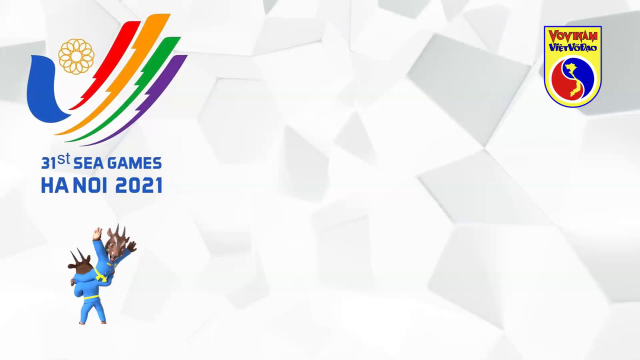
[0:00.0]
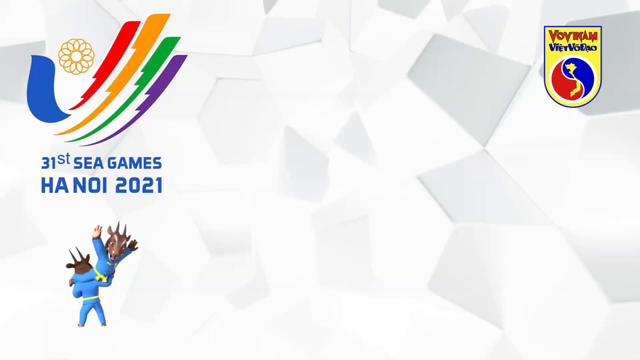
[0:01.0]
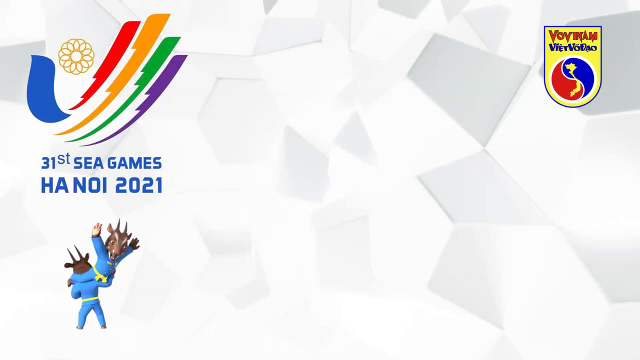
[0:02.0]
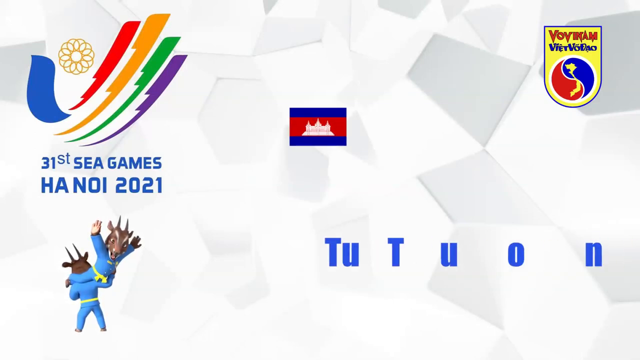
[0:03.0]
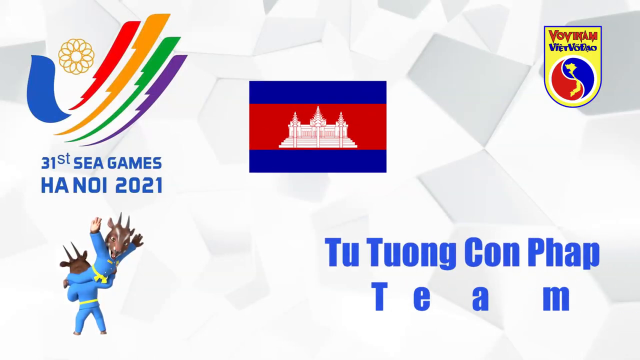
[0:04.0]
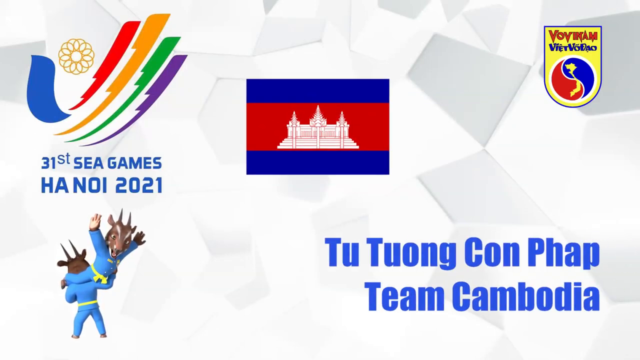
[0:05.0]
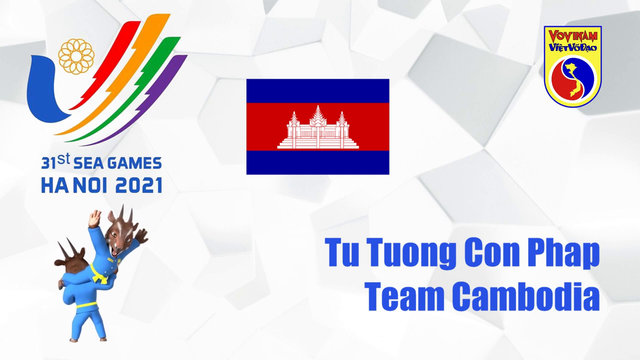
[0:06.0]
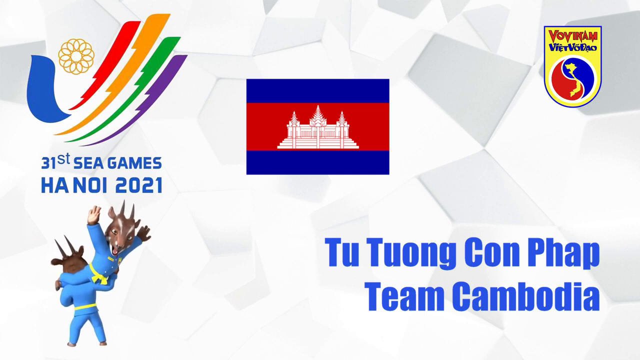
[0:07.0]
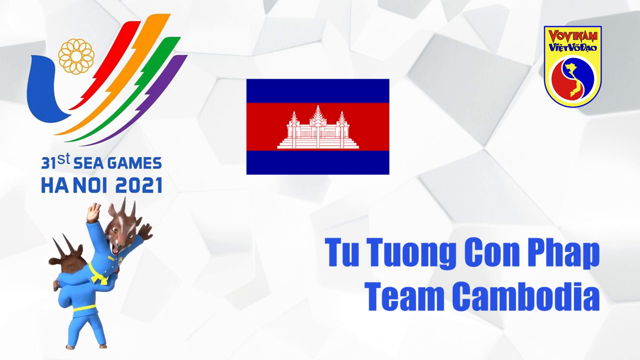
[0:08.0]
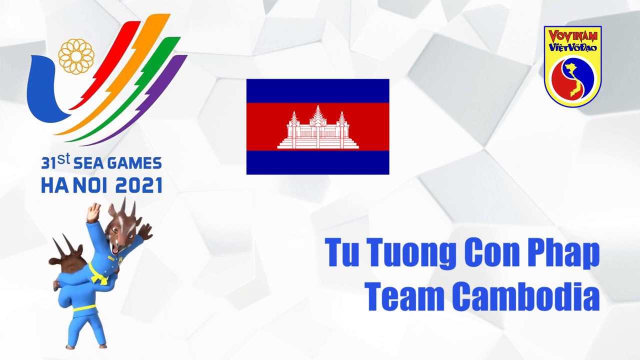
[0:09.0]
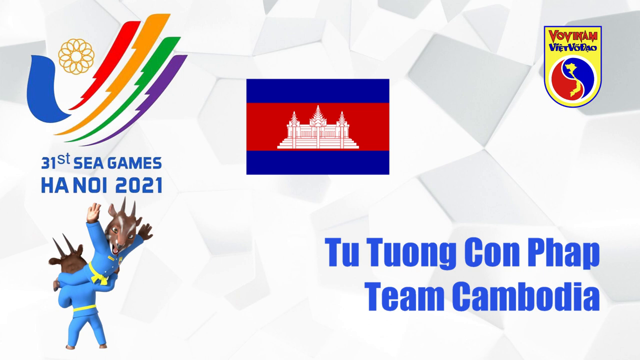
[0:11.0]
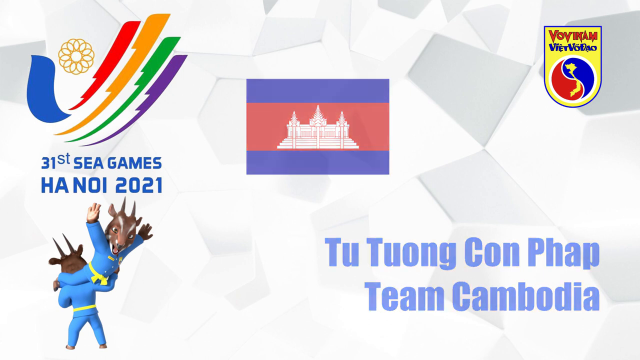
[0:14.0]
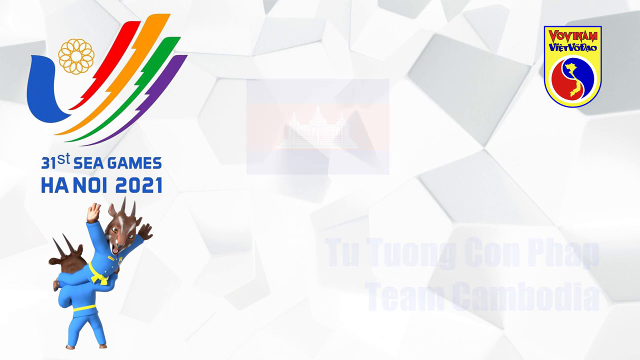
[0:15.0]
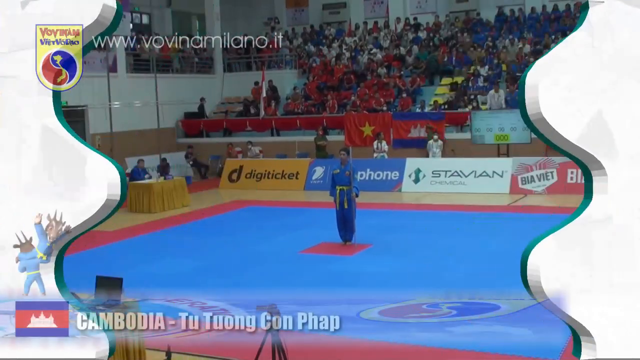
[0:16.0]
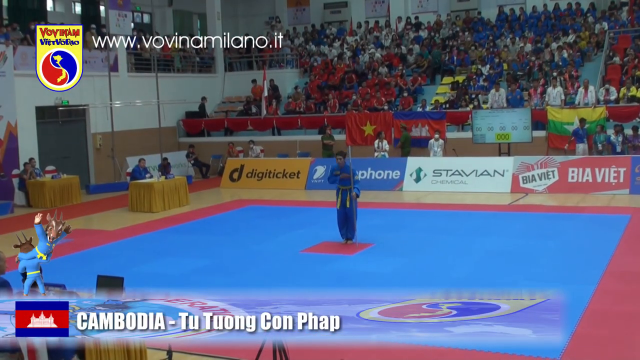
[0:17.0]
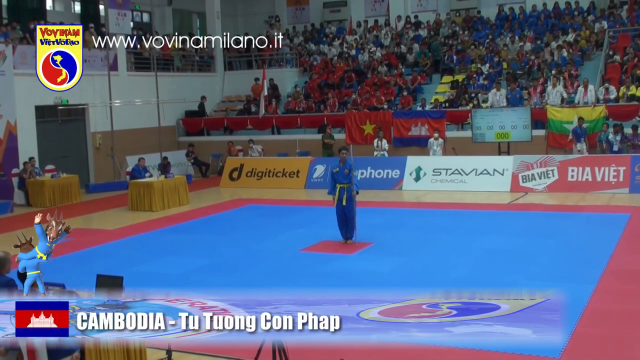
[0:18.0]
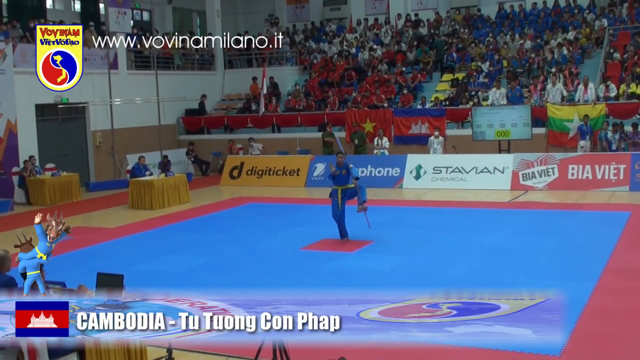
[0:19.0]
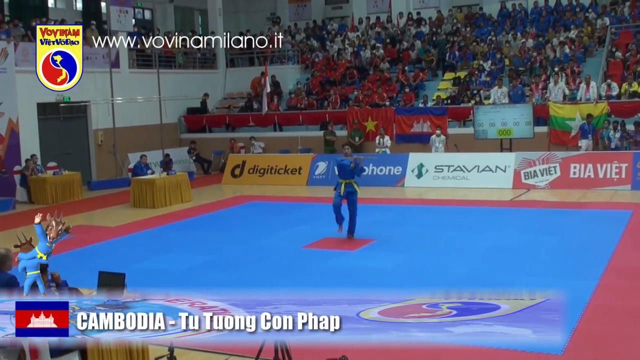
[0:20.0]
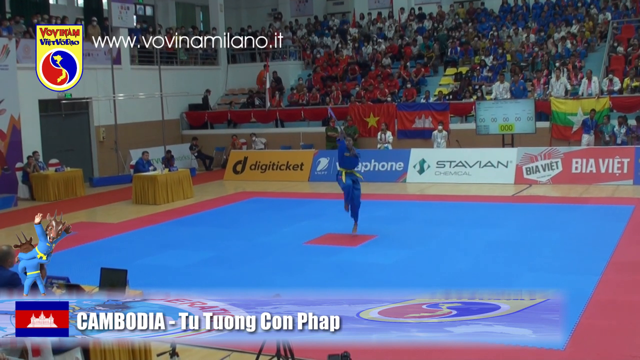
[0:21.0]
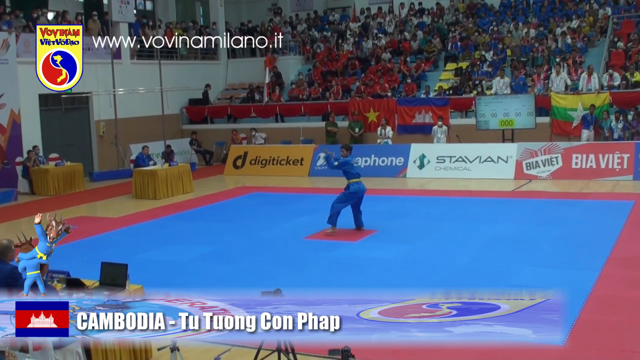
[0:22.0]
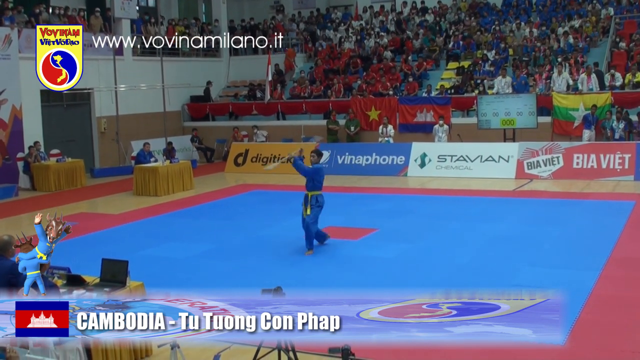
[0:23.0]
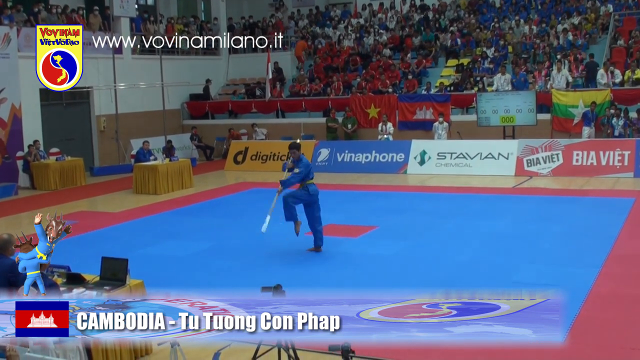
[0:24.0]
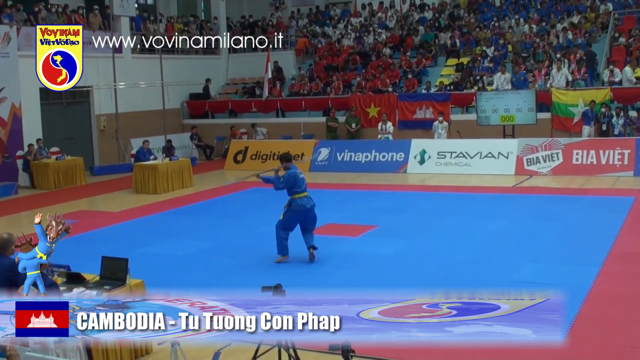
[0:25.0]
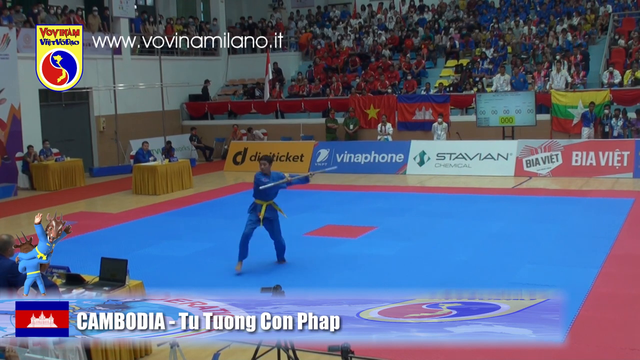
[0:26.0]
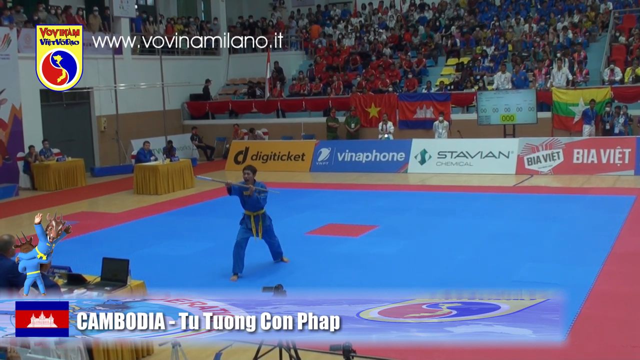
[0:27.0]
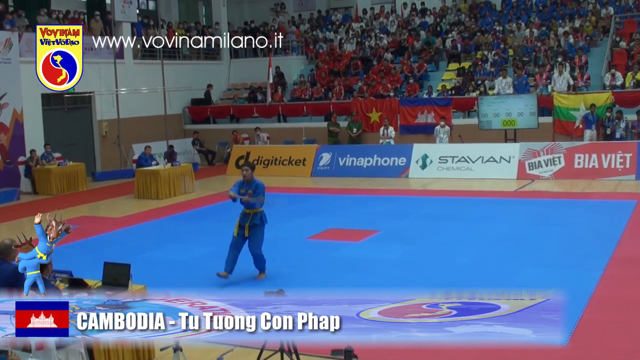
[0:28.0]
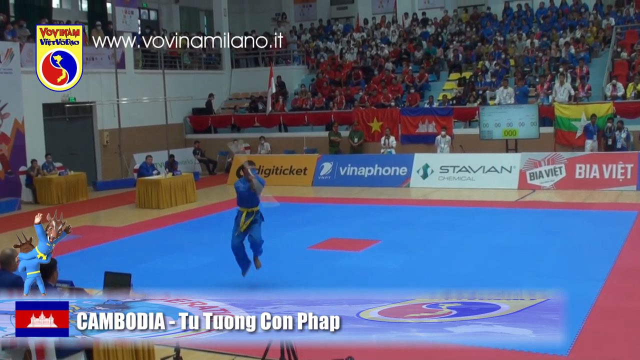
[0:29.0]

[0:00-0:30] The video begins with a computer screen with a white background. In the upper left are four swirls of color: red, orange, green, and purple. Beneath them the text reads "31st Sea Games, HA NOI 2021," and below that is an image of a goat wearing clothing, holding another goat. A yellow emblem is in the upper right corner. The screen then changes to show a flag in the middle with a blue stripe at the top and bottom, an orange center, and the image of a castle in the center of that. In the lower right the text reads "Tu Tuong Con Phap Team Cambodia." The screen then changes to a sports arena with a large audience in the background. Colorful banners from different companies line the arena near the floor. A man stands in the center of a blue arena on an orange square, wearing a blue suit with a yellow rope tie, twirling a spear or sword above his head.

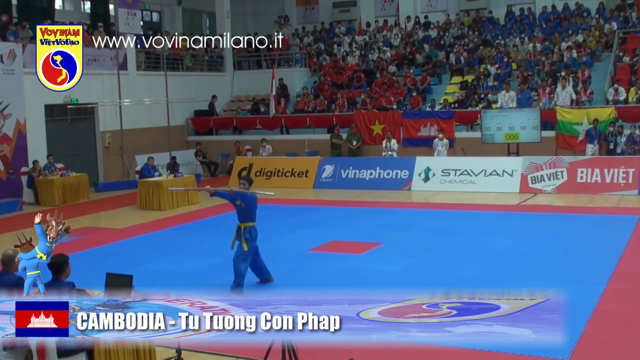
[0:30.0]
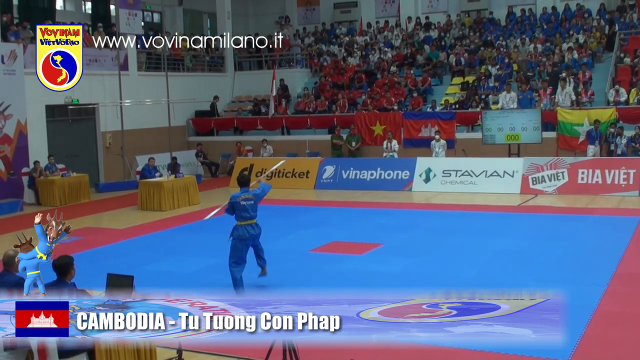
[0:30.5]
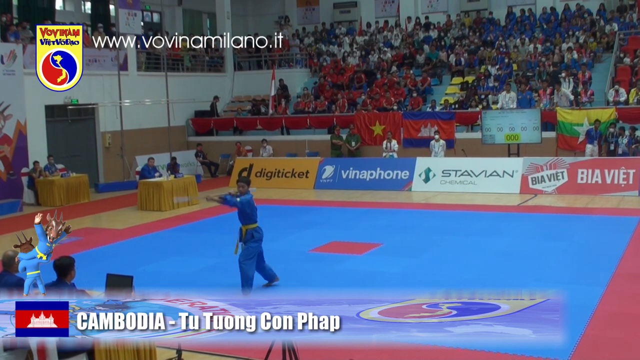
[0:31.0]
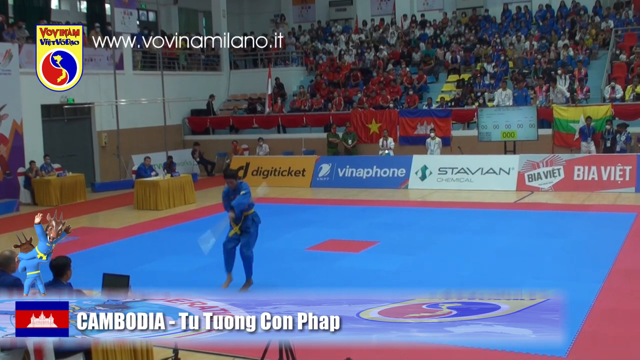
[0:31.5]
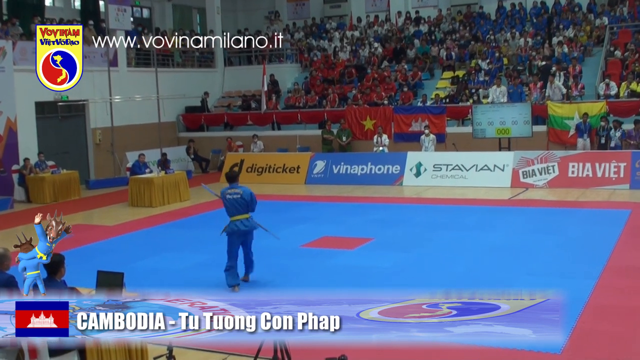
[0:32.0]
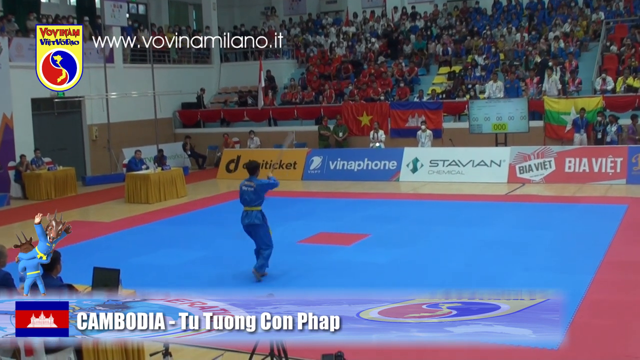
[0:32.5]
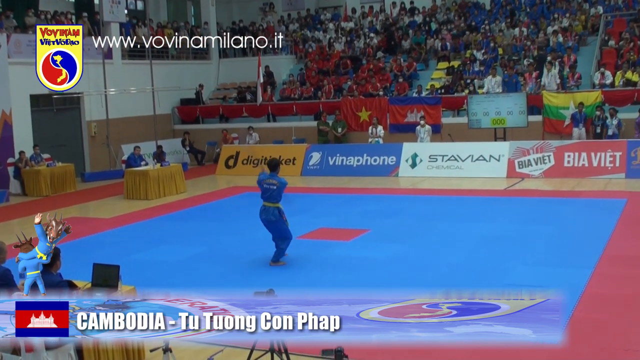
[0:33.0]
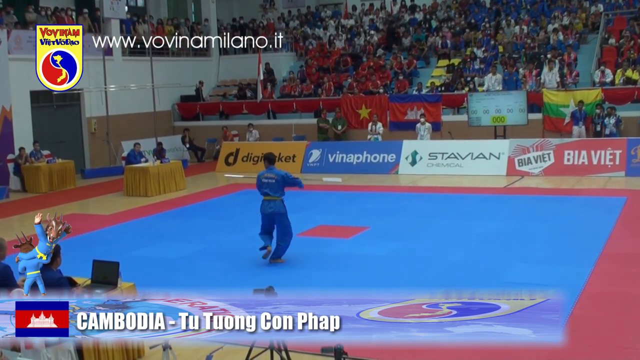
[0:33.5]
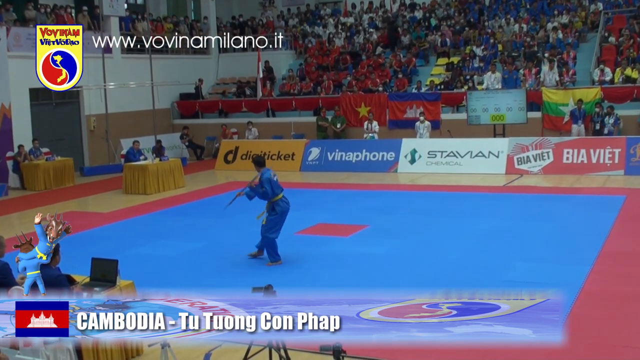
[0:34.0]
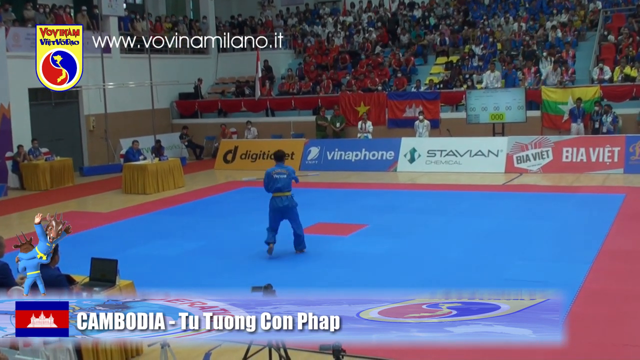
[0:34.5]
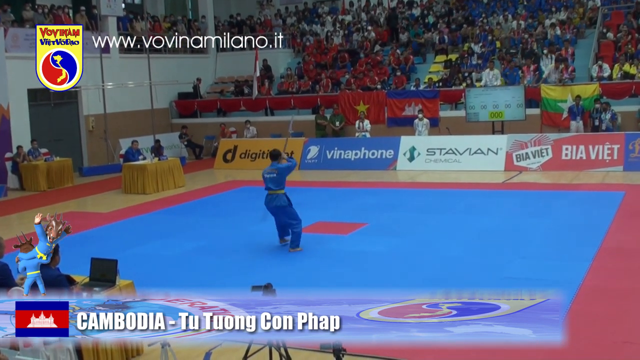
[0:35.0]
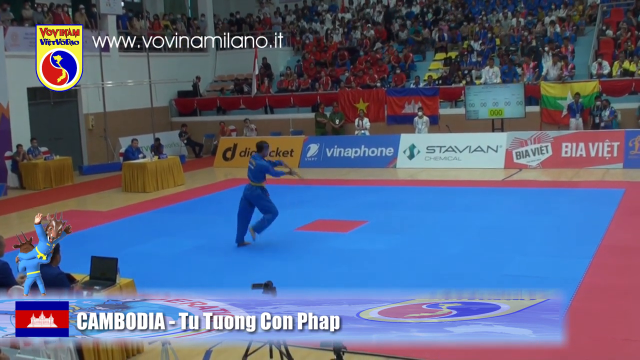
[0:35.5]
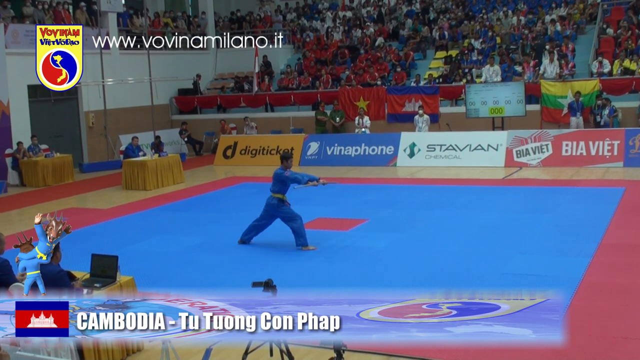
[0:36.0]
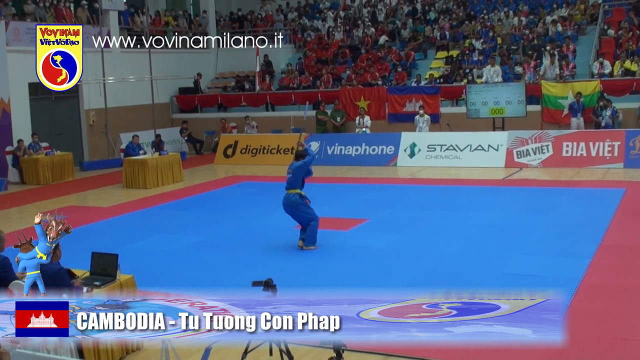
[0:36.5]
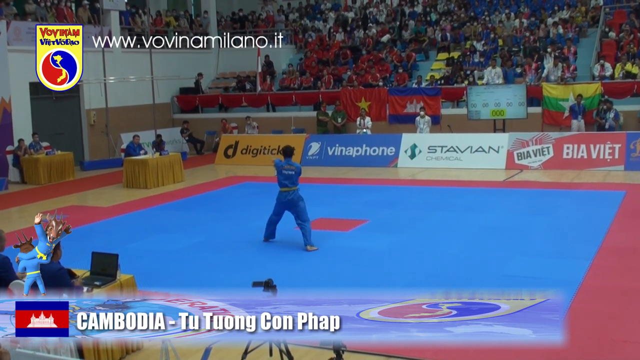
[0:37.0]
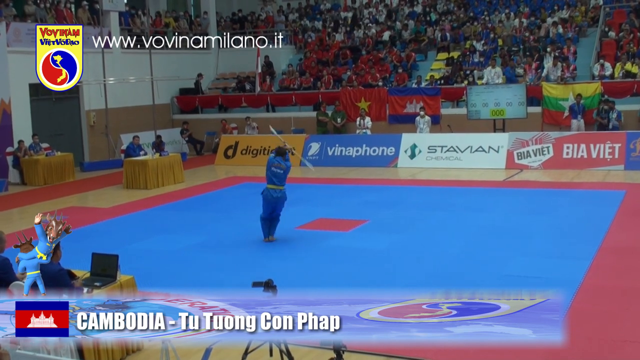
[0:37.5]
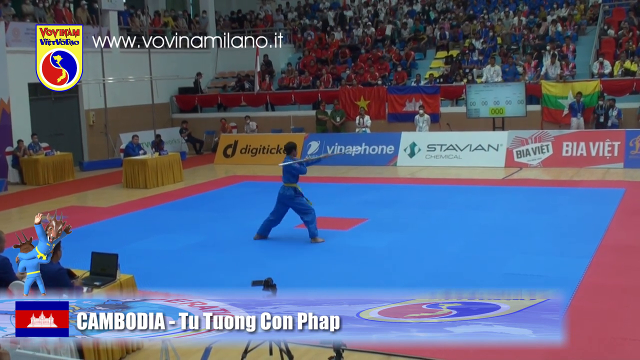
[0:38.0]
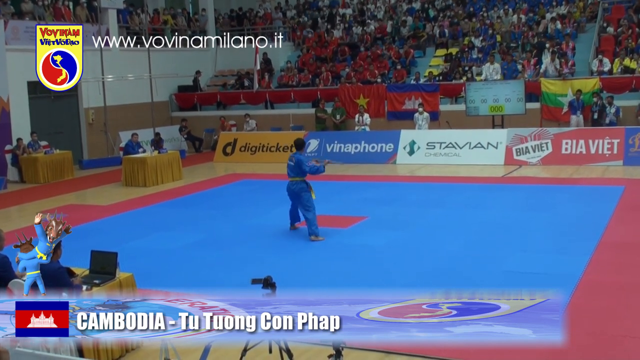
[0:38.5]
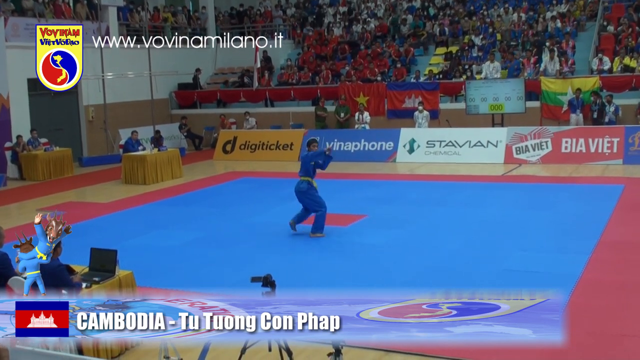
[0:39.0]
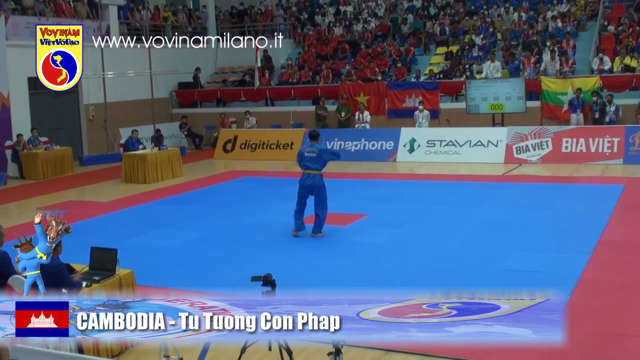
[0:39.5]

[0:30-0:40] A sports arena has a large audience in the background and colorful banners displaying ads for different companies at floor level. On the left, two people sit at a table with a brown cloth skirting it, and further back is a desk with two more people. The center of the arena has a blue floor with an orange square in the middle. A man in a blue suit and a yellow belt is on the floor, twirling a wooden sword or spear over his head, doing different moves with it and dancing around the arena. He twirls and moves very fast, performing very complicated moves with the object. In the upper left corner is a yellow logo with letters on it and a round symbol that is red on one side and blue on the other; next to it, in white letters, is the website "www.vovinamilano.it".